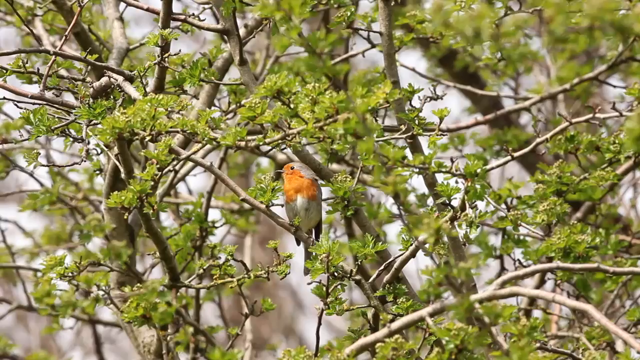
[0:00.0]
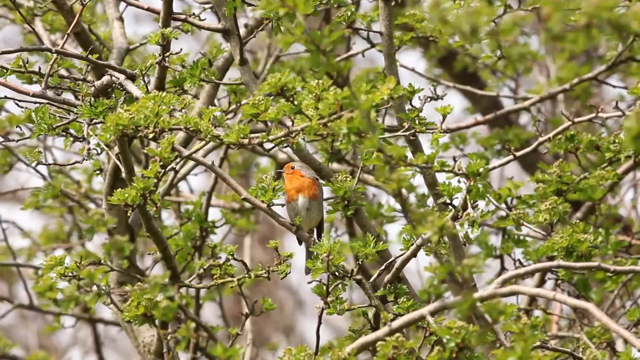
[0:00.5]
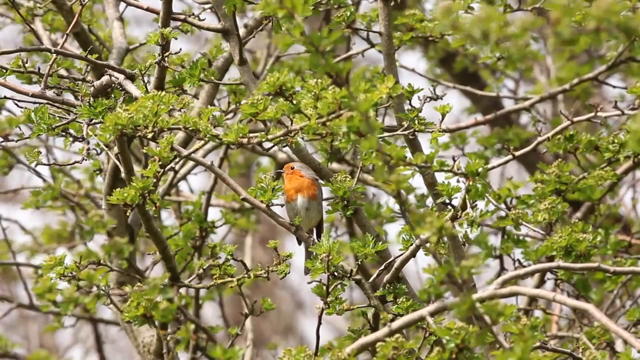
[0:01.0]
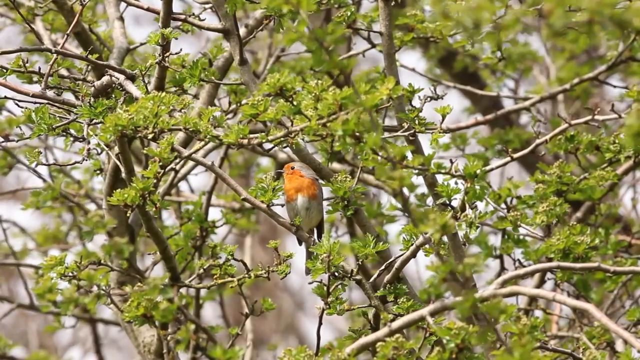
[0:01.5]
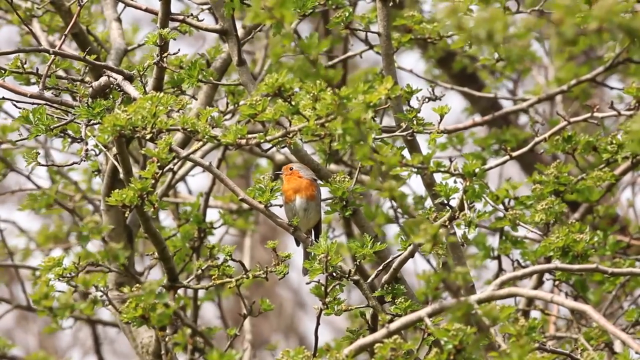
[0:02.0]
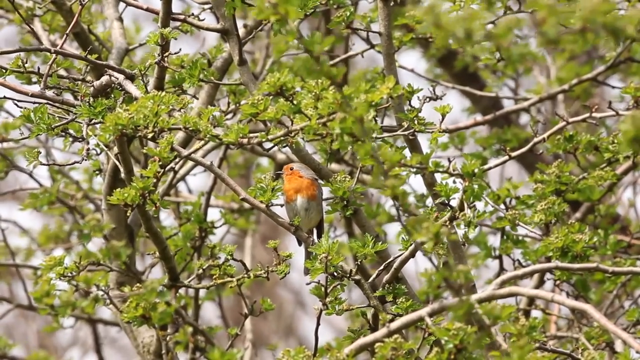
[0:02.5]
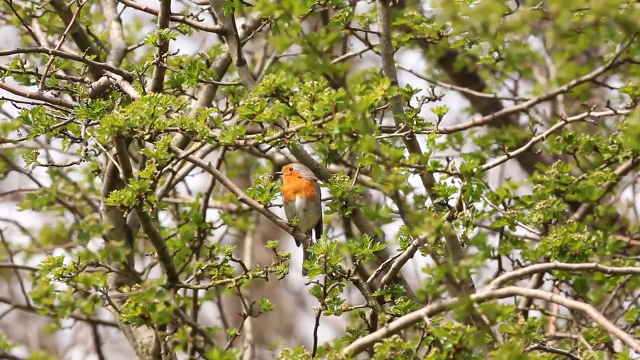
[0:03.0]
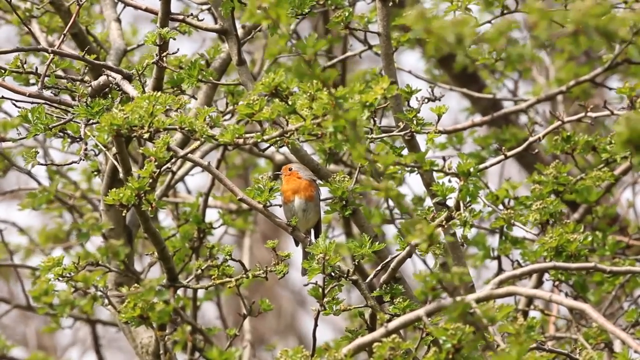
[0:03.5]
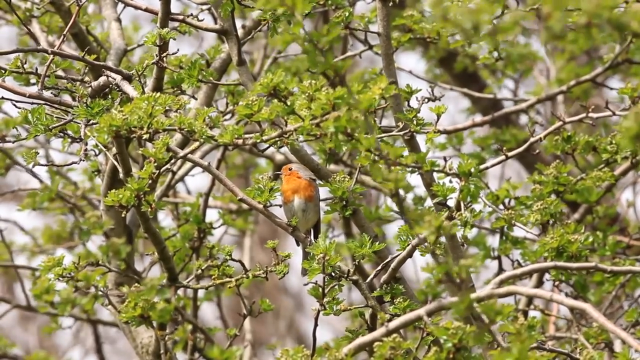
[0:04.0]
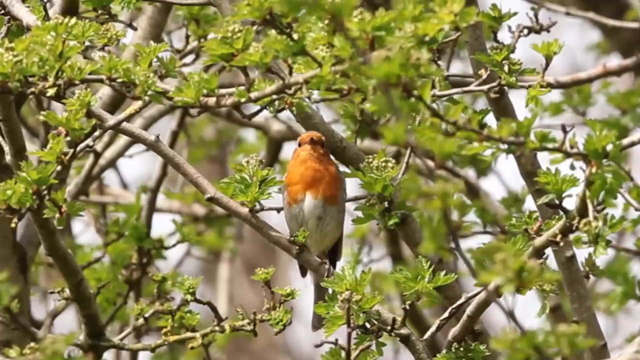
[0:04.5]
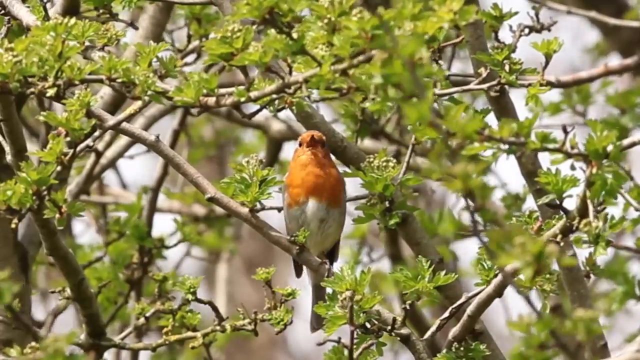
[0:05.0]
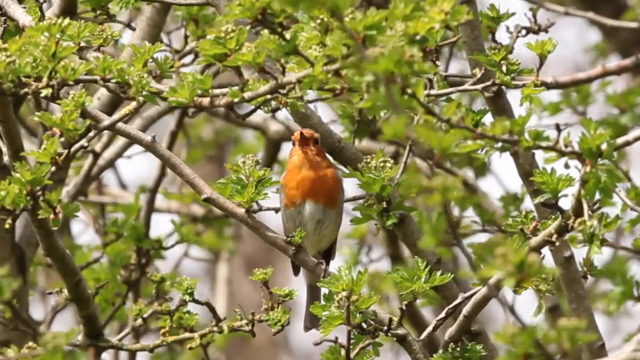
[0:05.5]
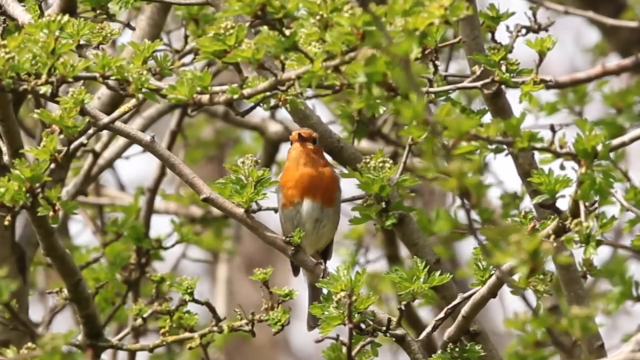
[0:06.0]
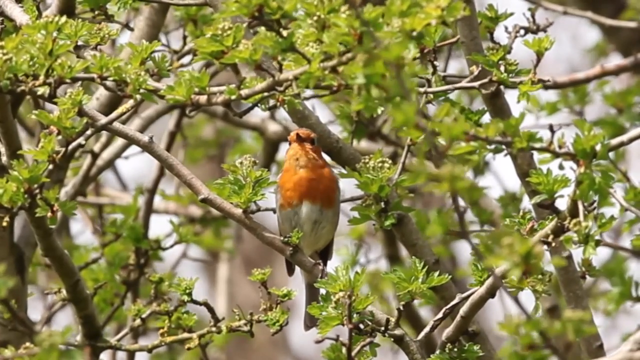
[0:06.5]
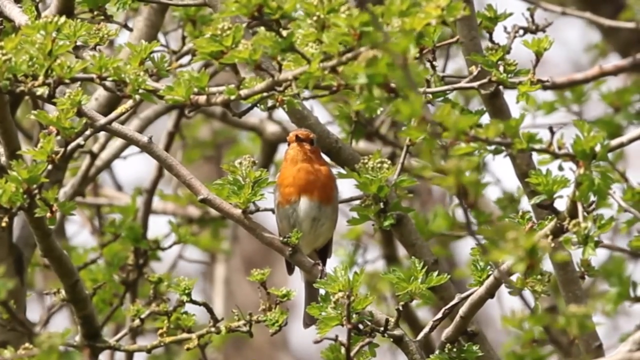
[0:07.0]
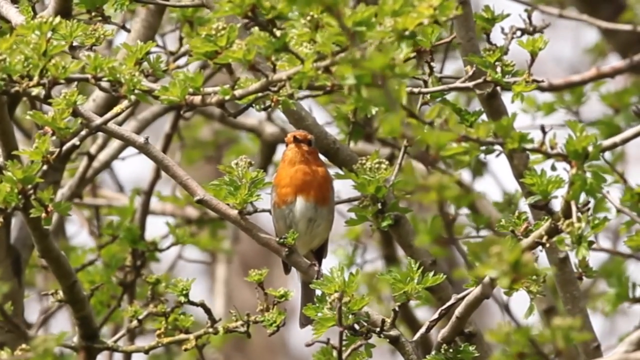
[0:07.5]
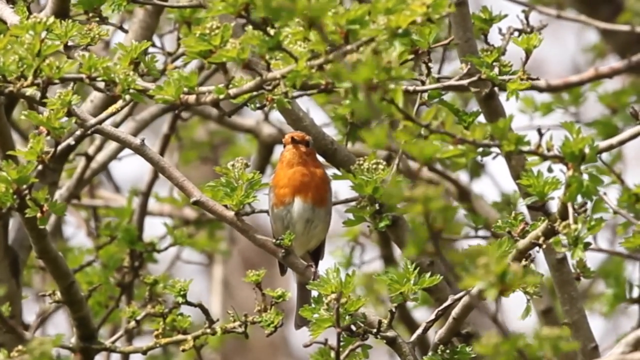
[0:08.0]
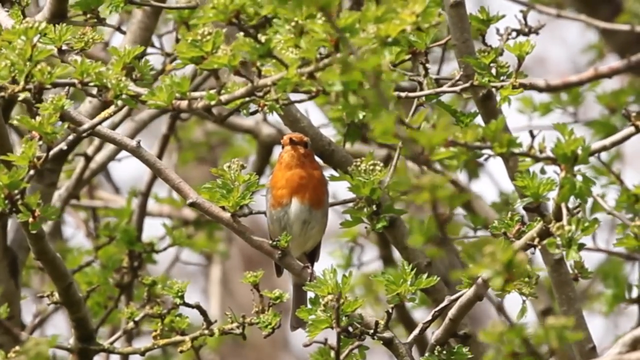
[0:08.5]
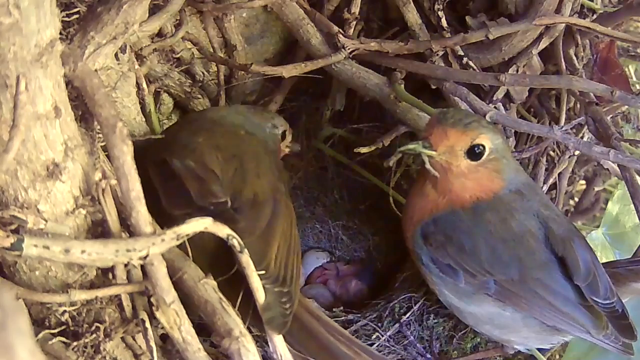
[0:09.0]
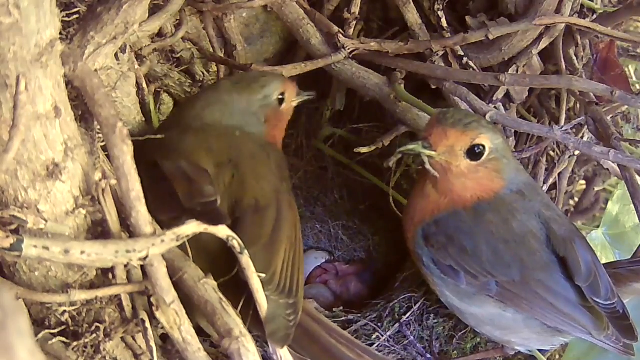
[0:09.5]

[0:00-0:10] A bird with orange, white and black colouring is on a tree branch and looks like it is whistling. Next, two colourful birds are very close to their nest, possibly in a tree trunk. They look like they have probably just had newborn babies, as smaller birds appear to be inside the tree trunk area.